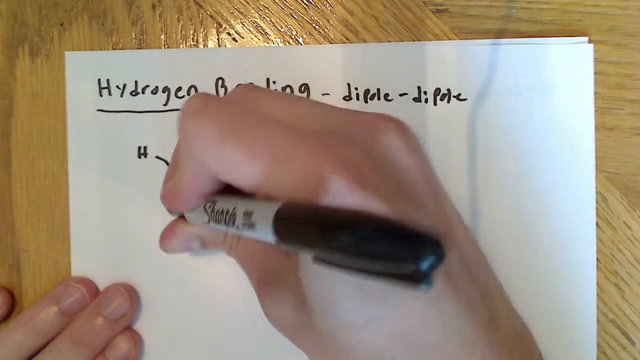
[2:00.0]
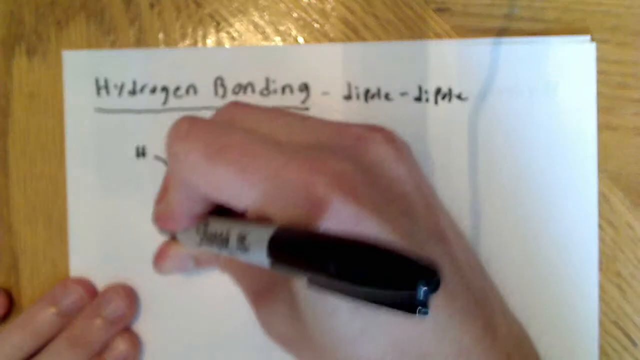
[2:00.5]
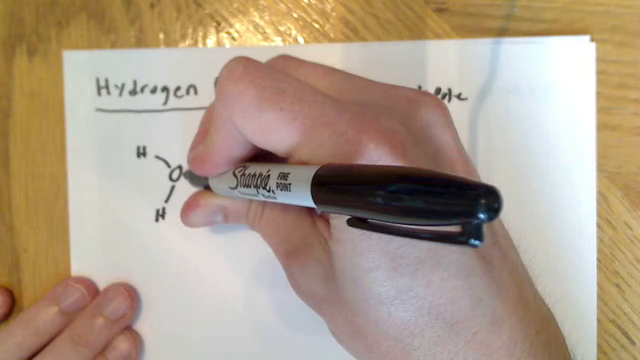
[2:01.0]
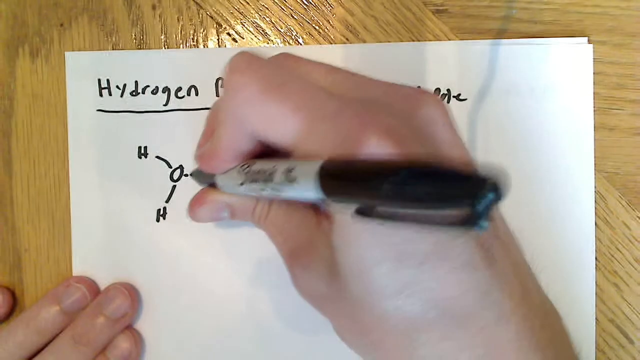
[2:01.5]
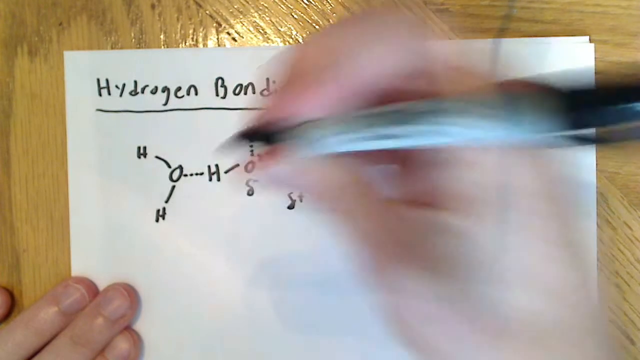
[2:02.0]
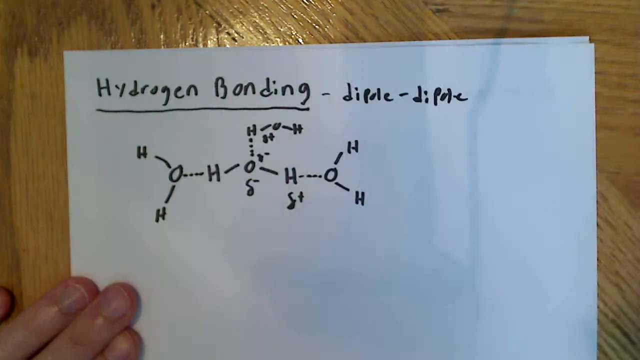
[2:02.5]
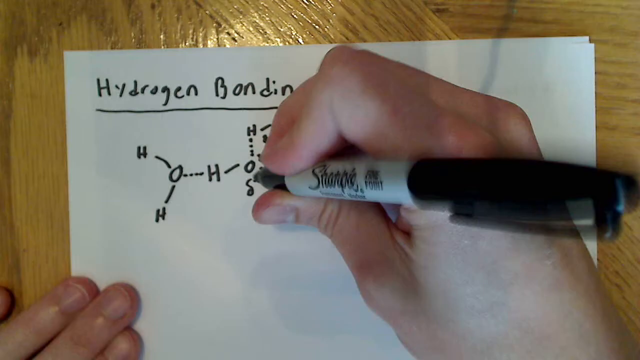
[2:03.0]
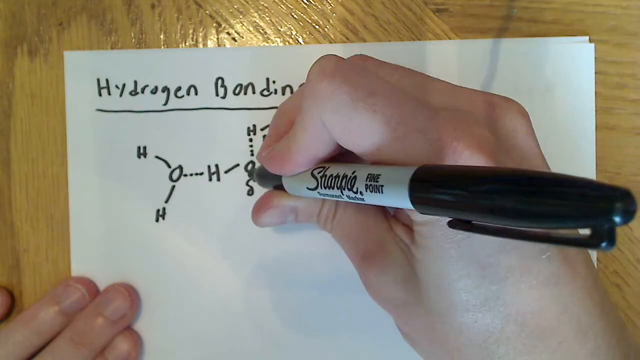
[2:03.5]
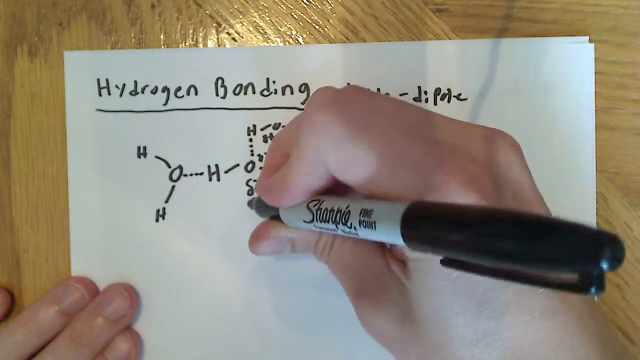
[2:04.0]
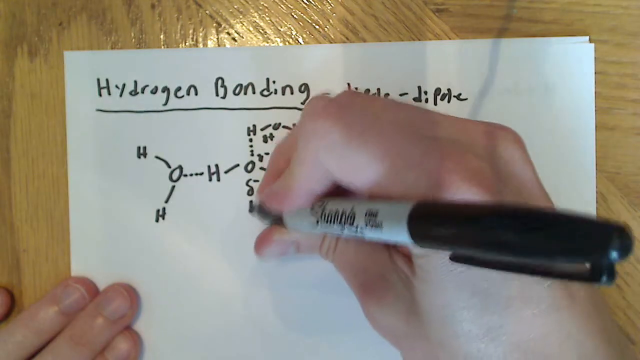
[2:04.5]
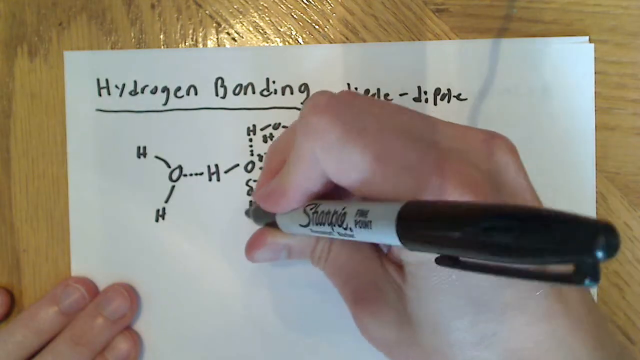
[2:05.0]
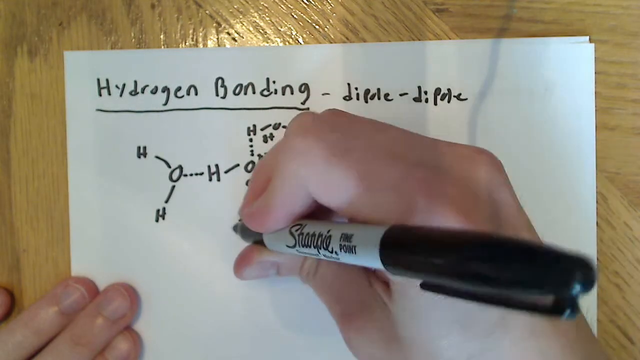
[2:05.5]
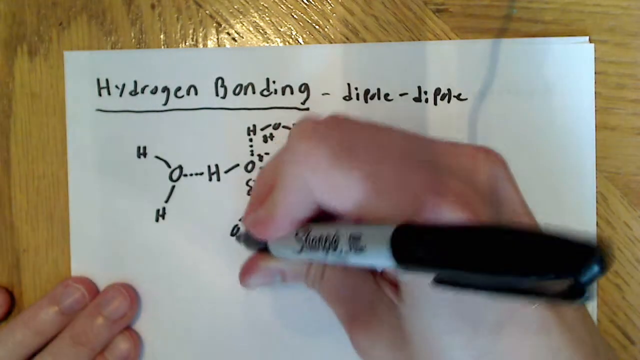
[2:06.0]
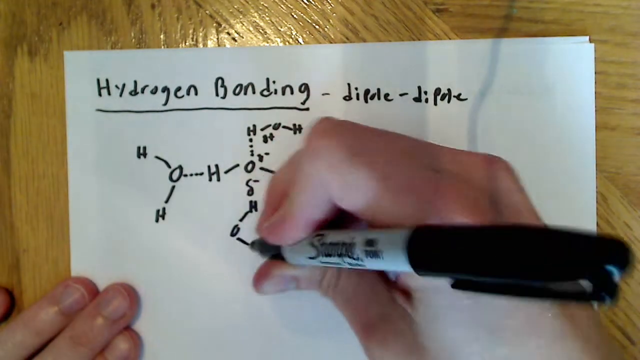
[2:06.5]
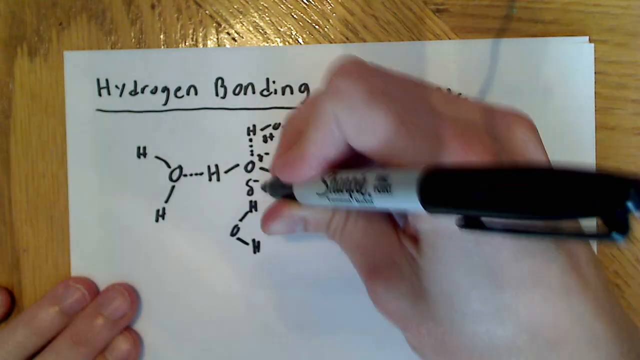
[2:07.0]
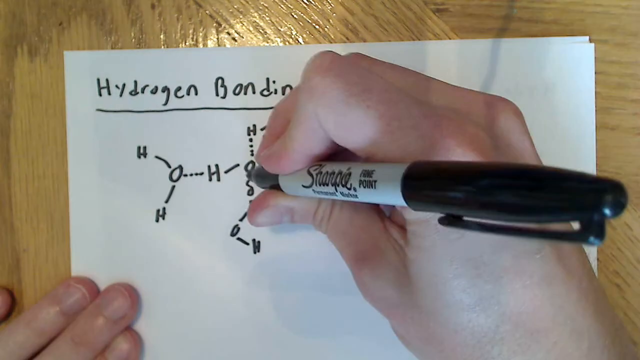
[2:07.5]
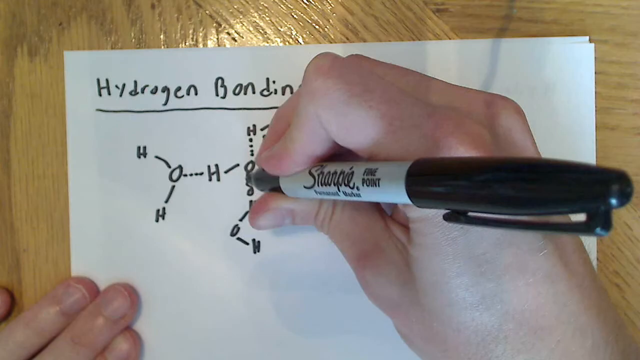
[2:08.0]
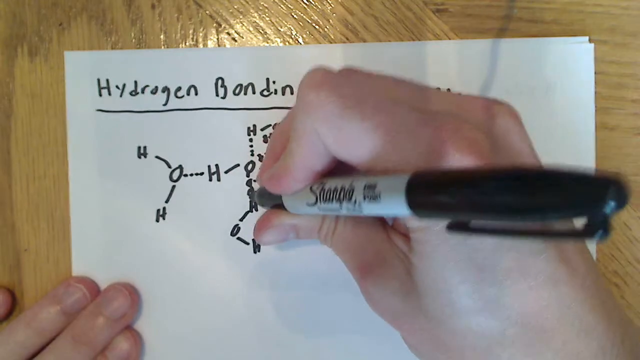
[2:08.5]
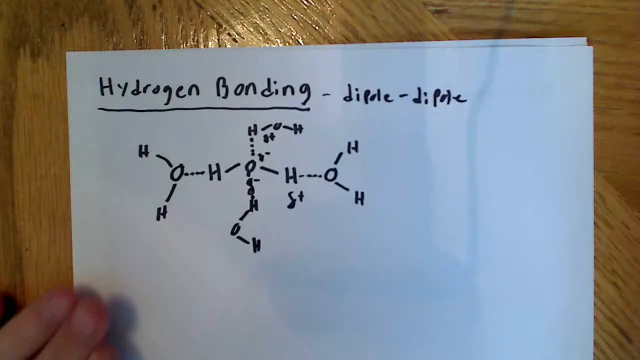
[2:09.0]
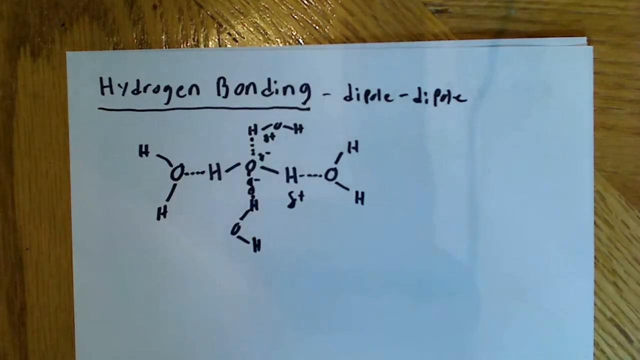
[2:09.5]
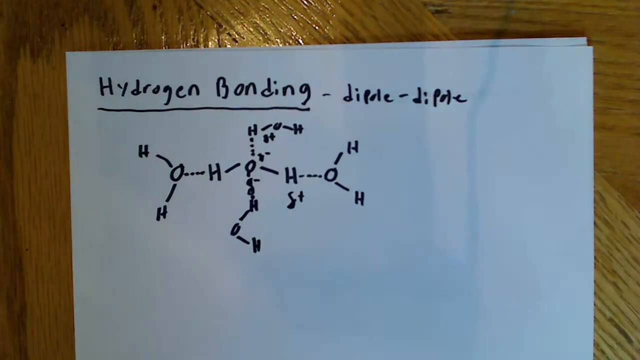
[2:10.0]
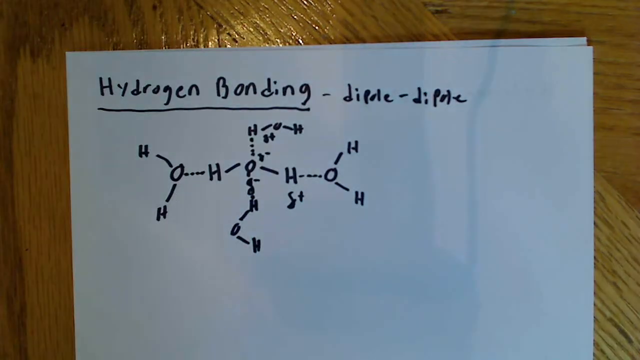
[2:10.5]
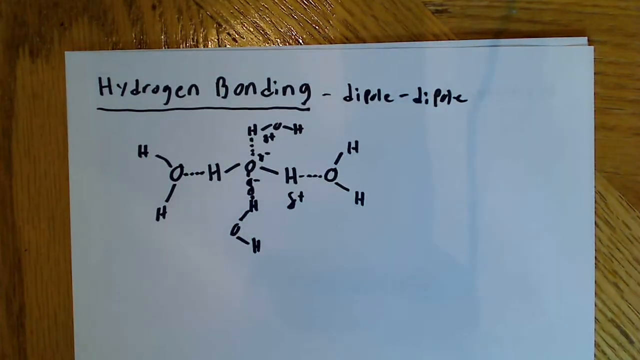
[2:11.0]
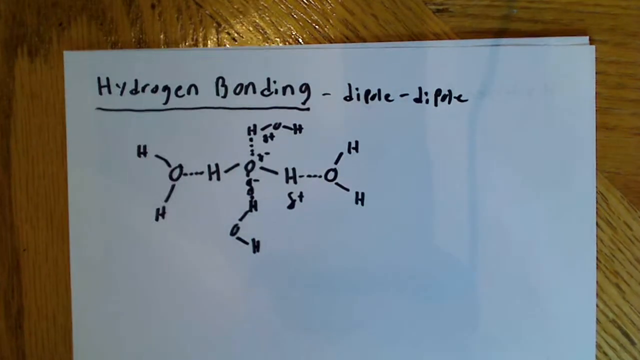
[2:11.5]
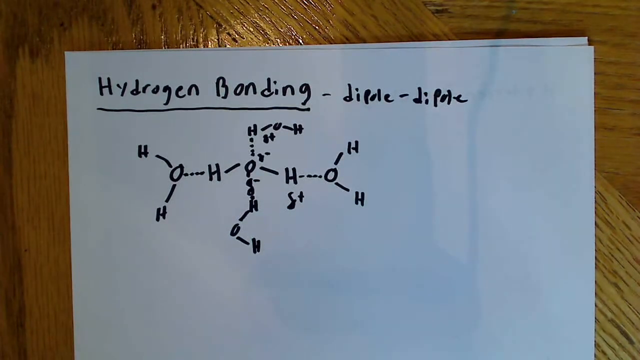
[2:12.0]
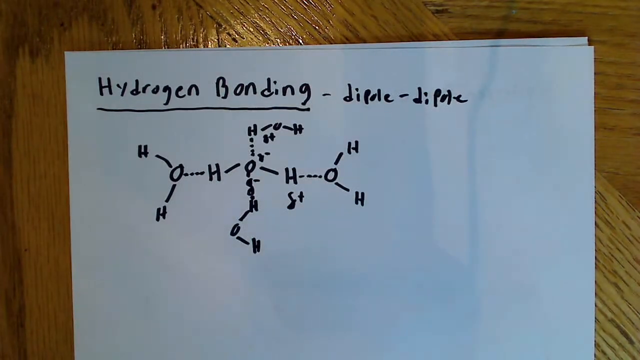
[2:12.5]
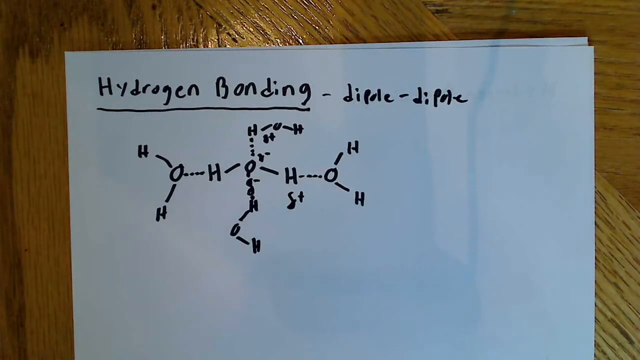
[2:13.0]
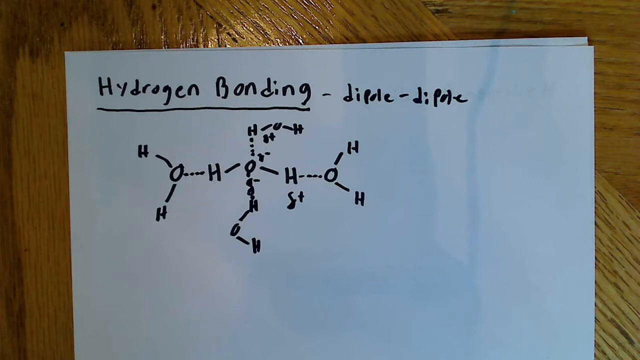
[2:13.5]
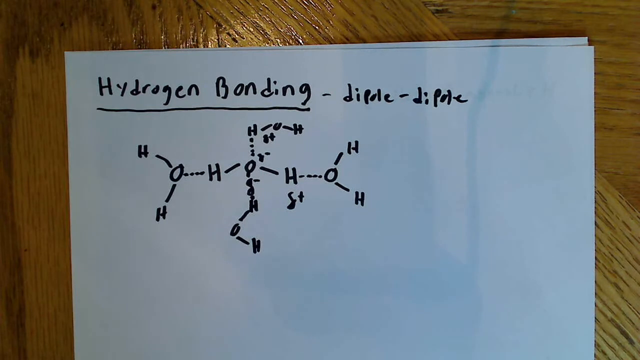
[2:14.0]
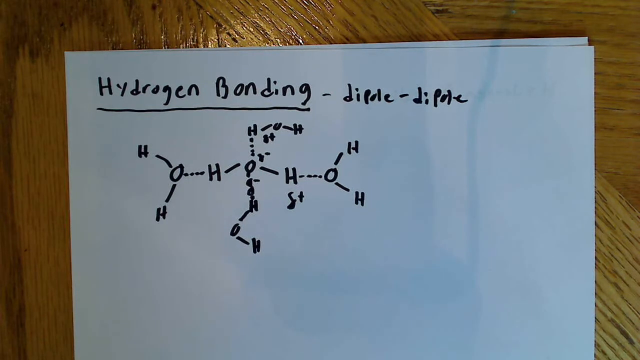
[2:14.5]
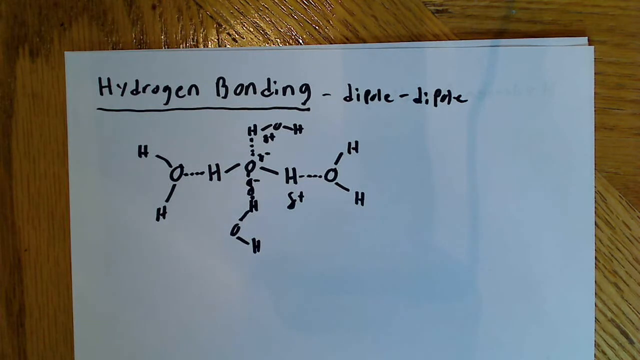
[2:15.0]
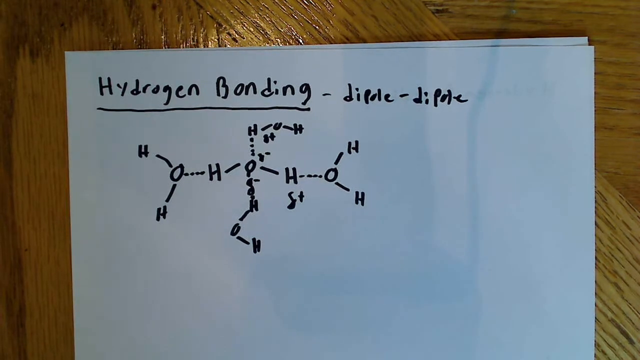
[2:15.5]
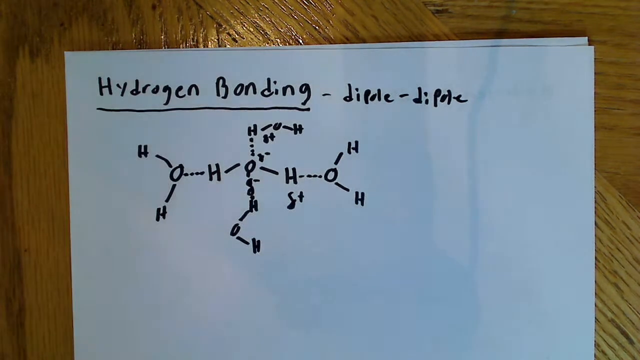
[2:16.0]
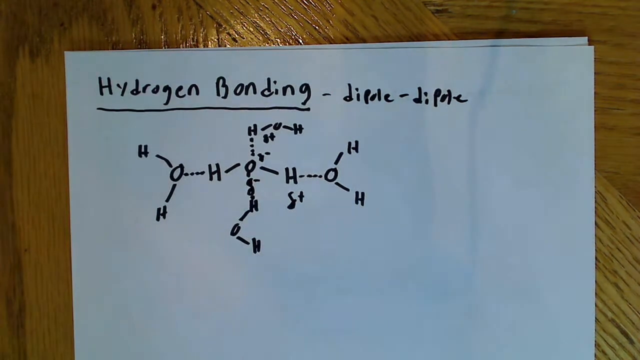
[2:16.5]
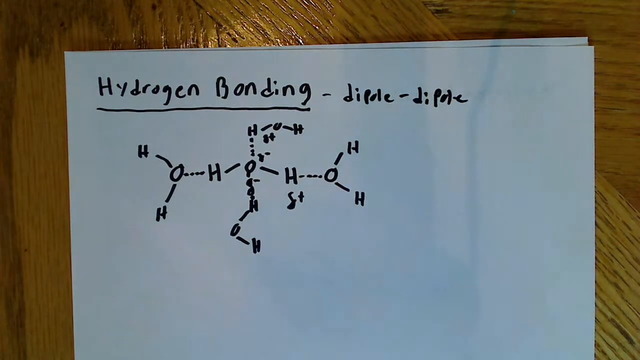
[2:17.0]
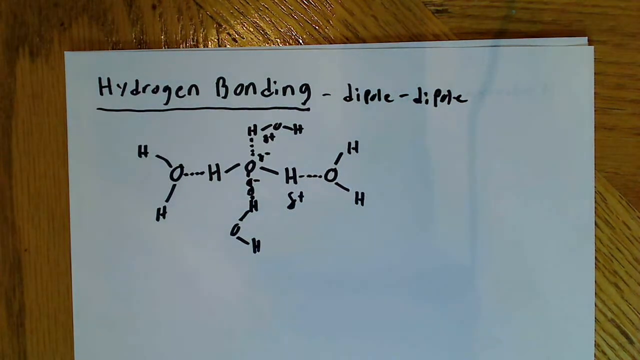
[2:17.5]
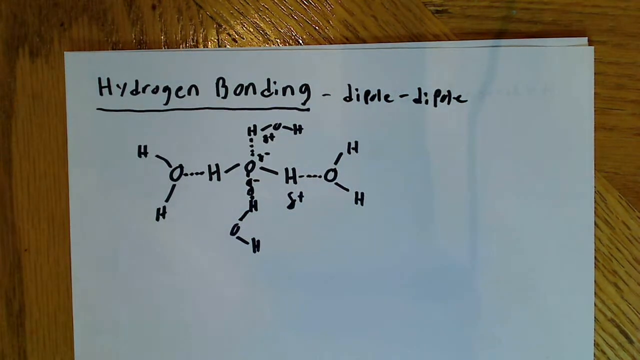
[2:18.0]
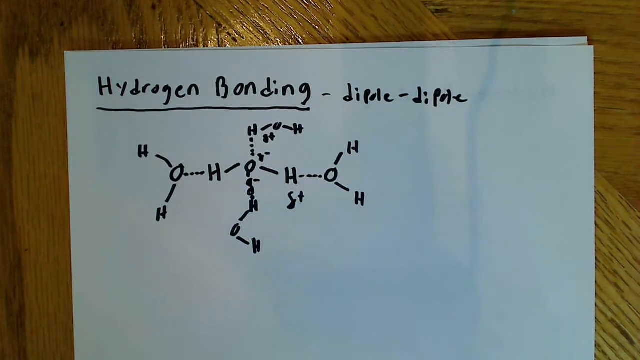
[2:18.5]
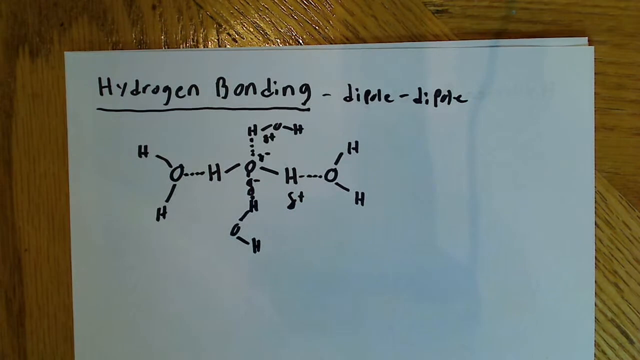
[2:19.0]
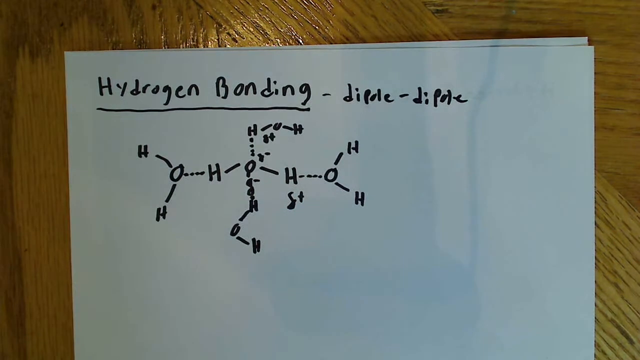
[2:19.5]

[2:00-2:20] White printer paper lies on a brown, shiny wooden table. Written on it in Sharpie are the words "hydrogen bonding - dipole - dipole," with "hydrogen bonding" underlined. Underneath are various diagrams of capital Hs and Os connected by dashes and dotted lines, with Greek deltas that have either pluses or minuses next to them. At the beginning, two hands of a white person with short fingernails are in the frame: the left hand is in the lower corner holding down the paper, and the right hand is in the middle of the frame holding a Sharpie, continuing to draw diagrams with Hs, Os and dotted lines. It finishes one on the far left, then draws one slightly left of center toward the bottom, underneath the other diagrams, again with small indistinct letters between them. Toward the end, both hands leave the frame at the same time, and slight shadows pass across the surface of the paper.